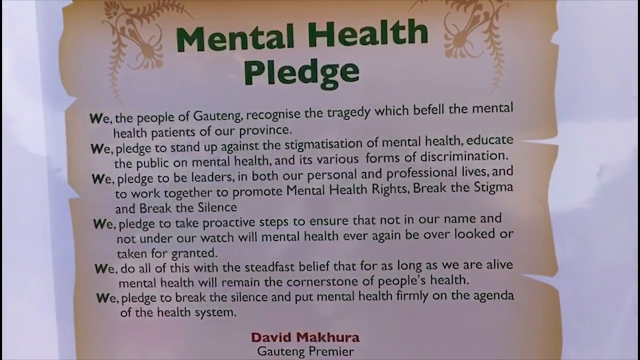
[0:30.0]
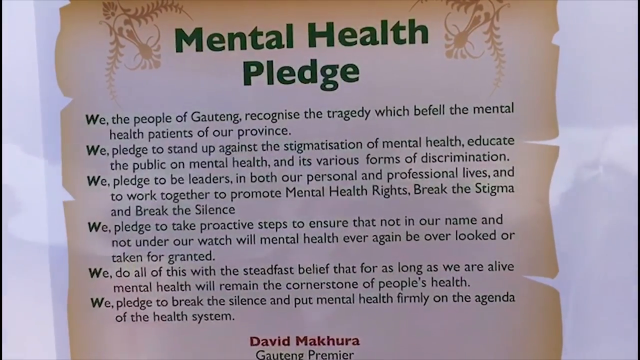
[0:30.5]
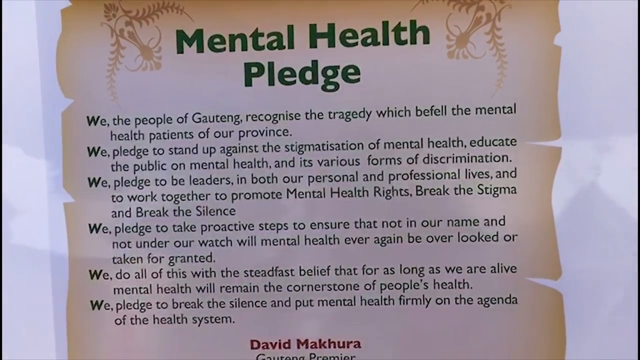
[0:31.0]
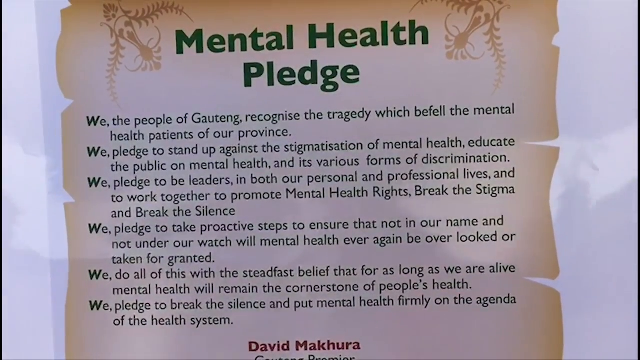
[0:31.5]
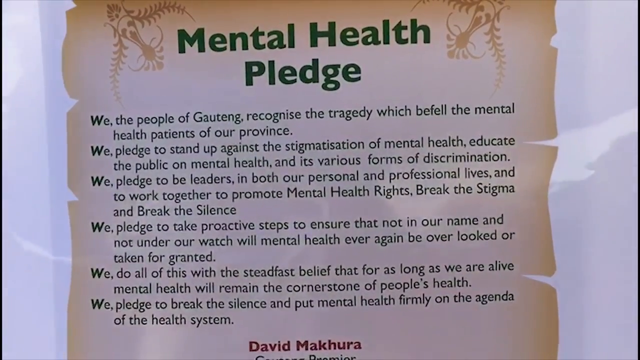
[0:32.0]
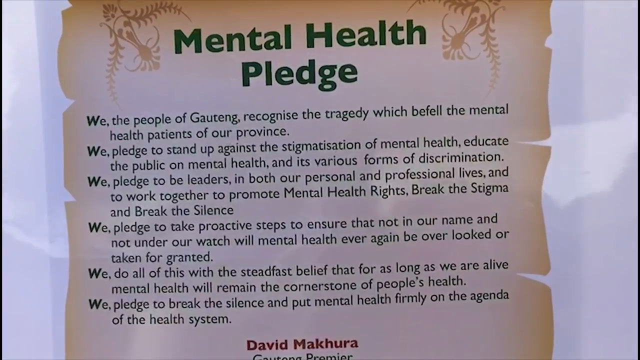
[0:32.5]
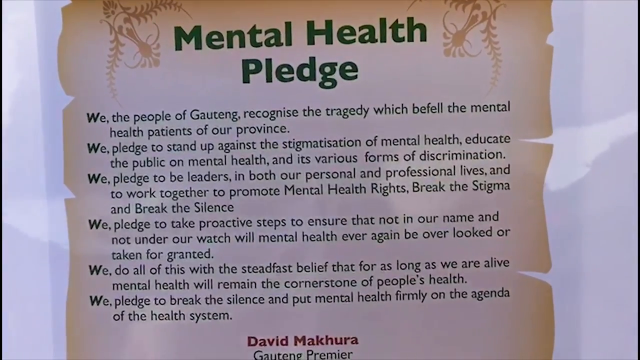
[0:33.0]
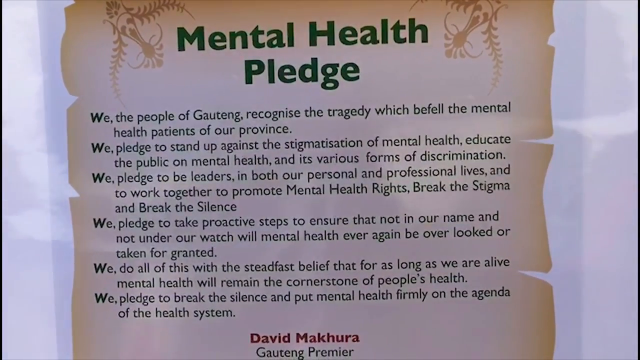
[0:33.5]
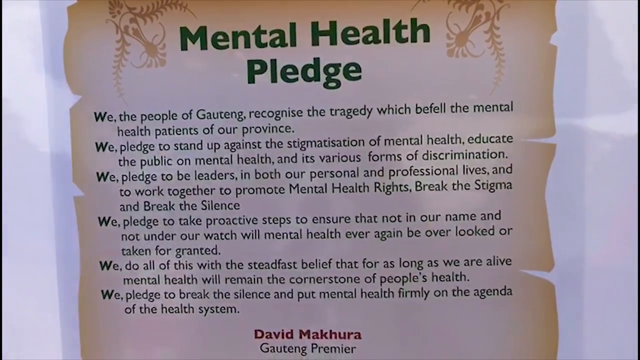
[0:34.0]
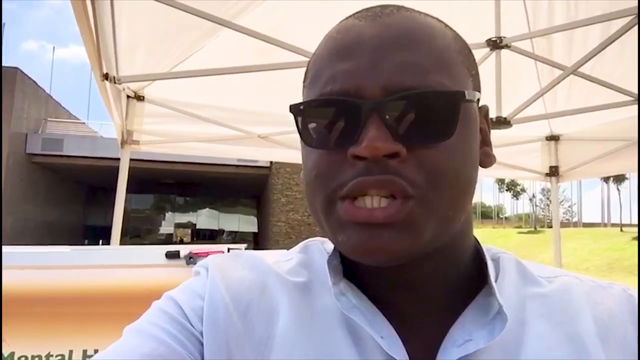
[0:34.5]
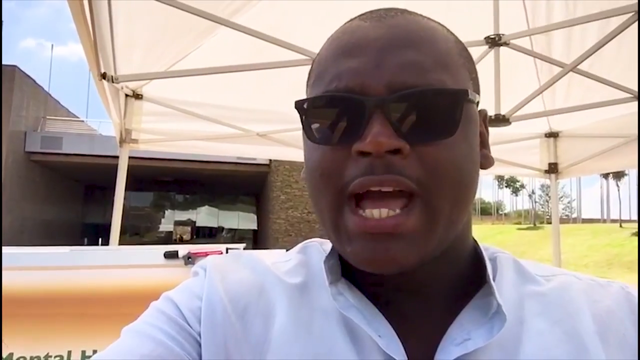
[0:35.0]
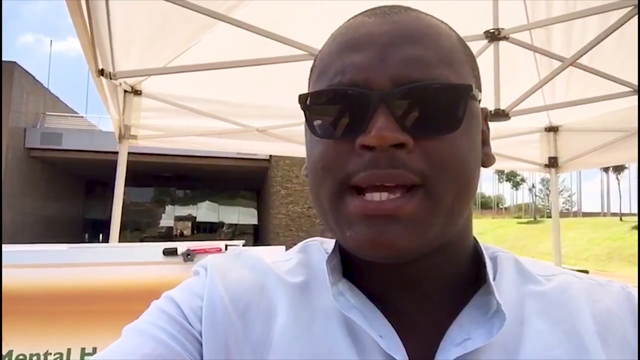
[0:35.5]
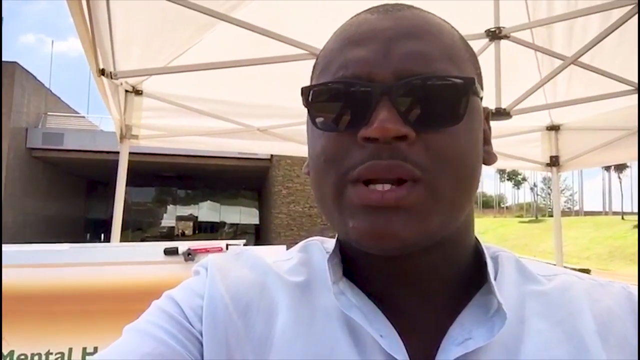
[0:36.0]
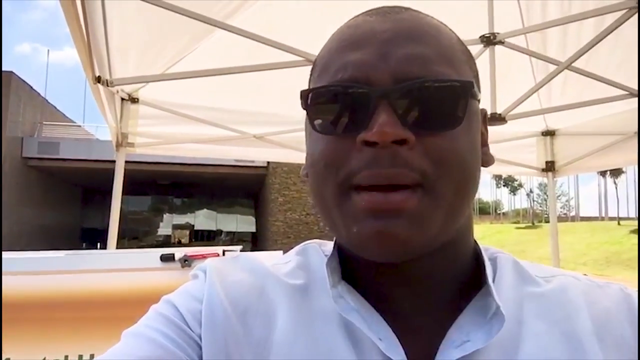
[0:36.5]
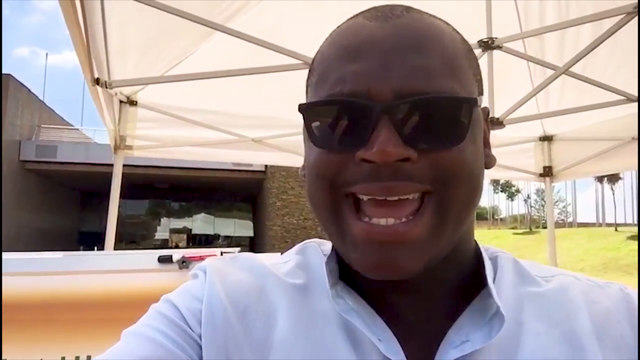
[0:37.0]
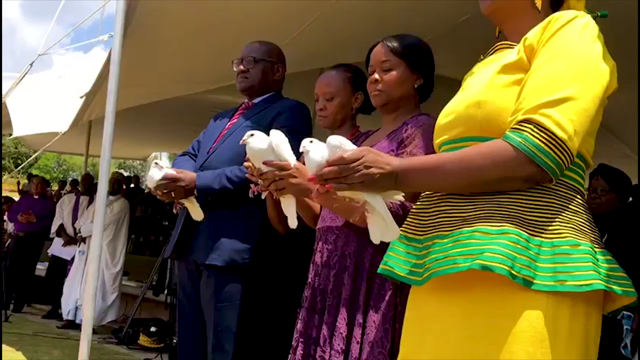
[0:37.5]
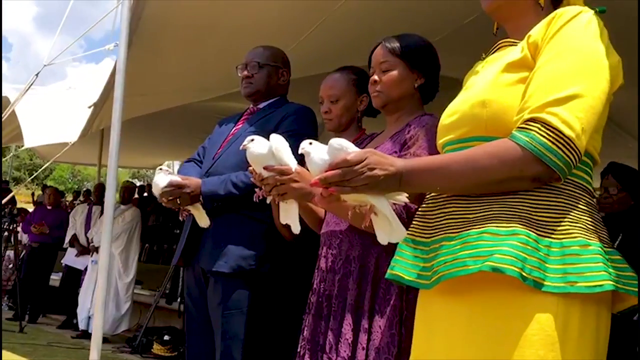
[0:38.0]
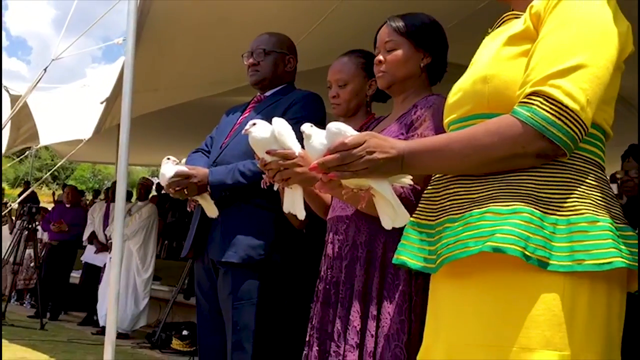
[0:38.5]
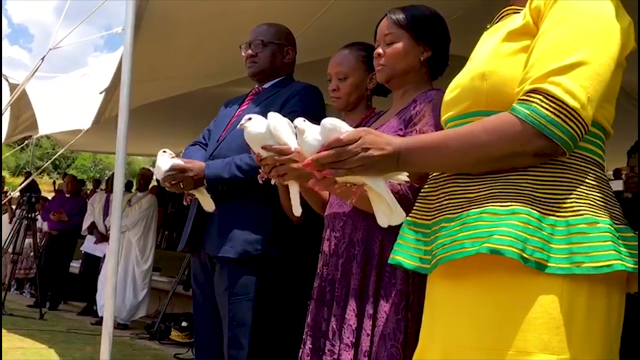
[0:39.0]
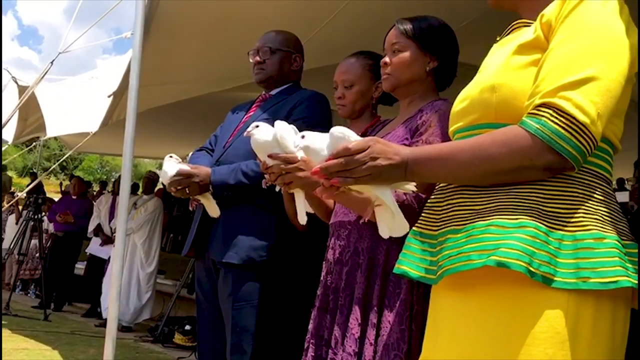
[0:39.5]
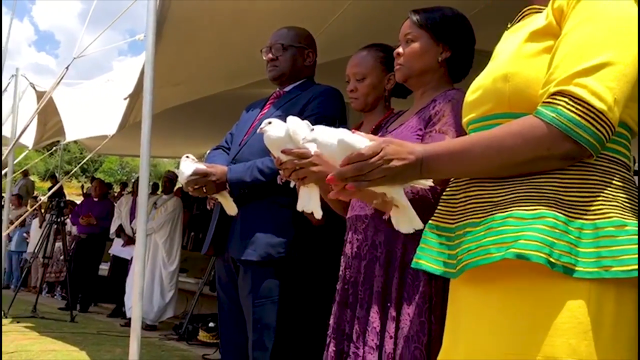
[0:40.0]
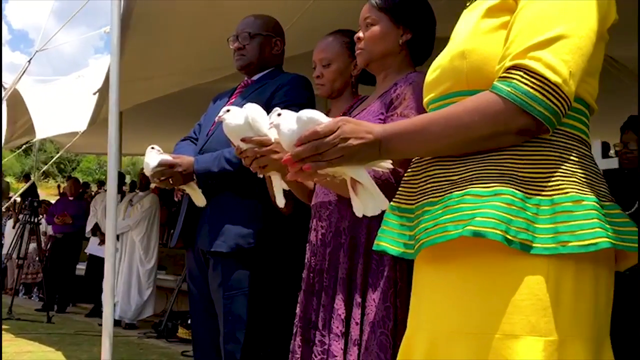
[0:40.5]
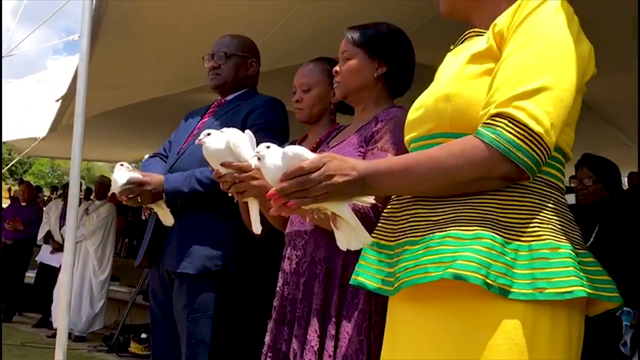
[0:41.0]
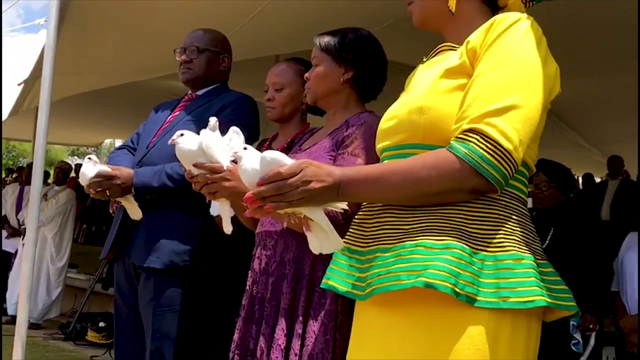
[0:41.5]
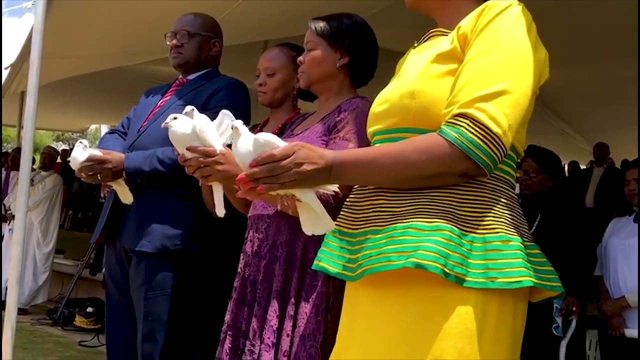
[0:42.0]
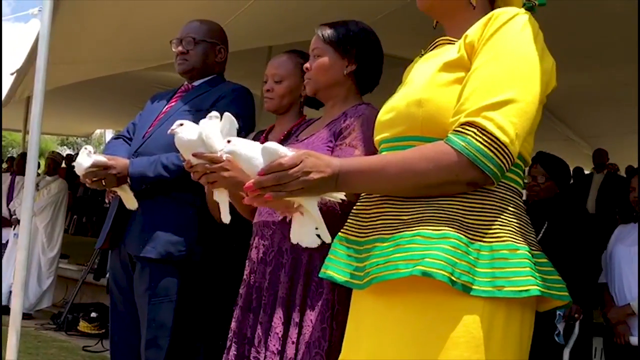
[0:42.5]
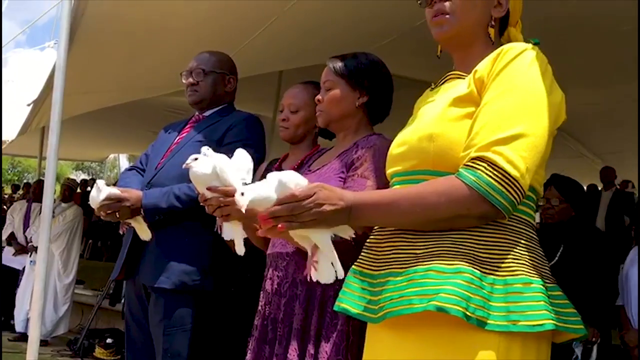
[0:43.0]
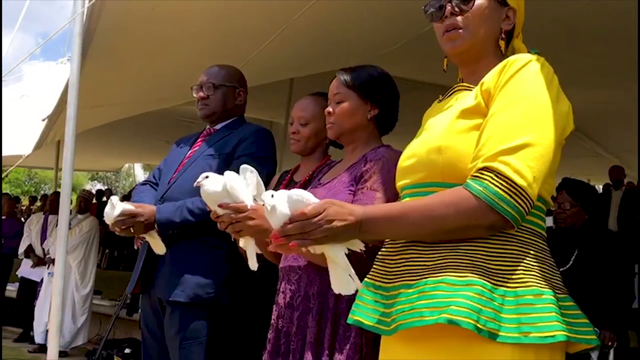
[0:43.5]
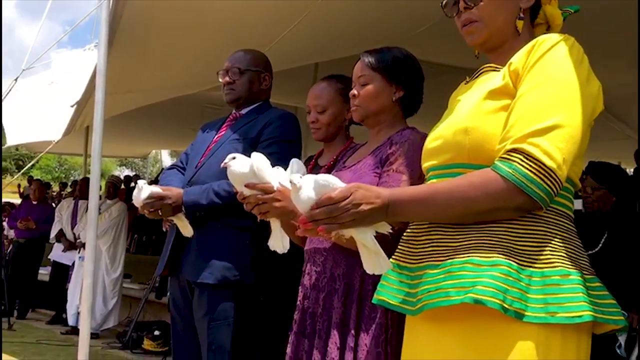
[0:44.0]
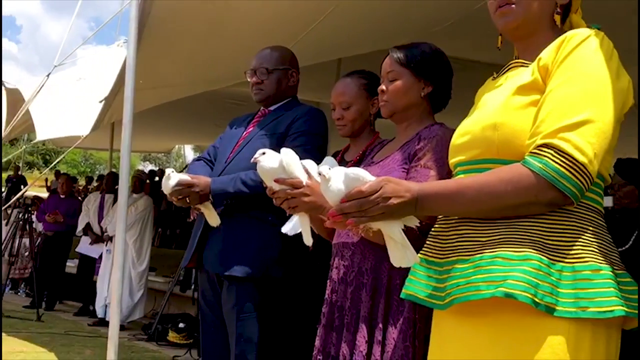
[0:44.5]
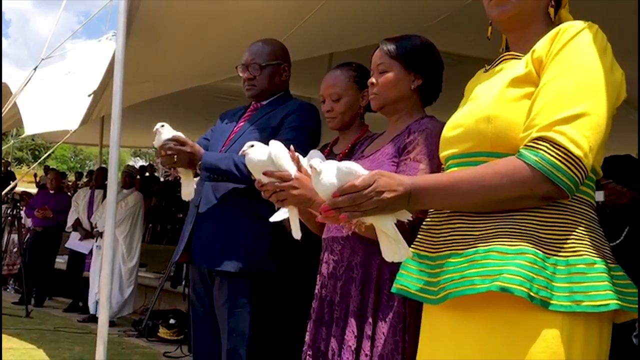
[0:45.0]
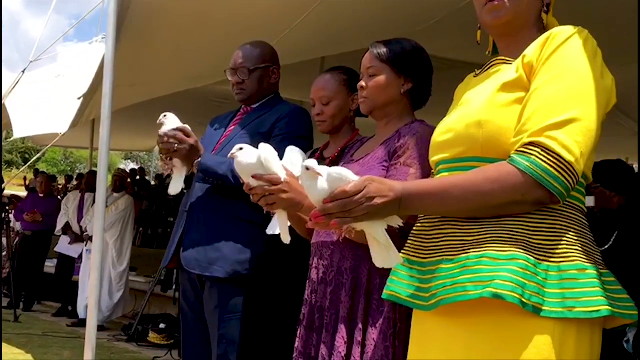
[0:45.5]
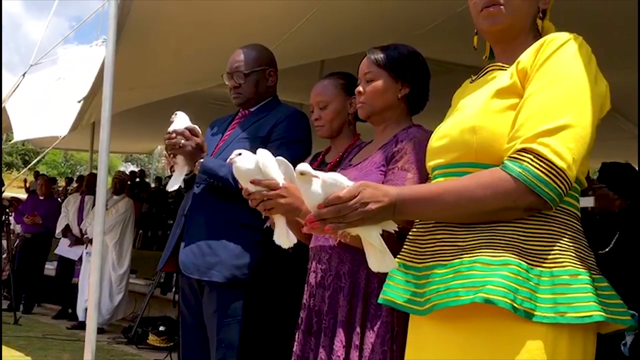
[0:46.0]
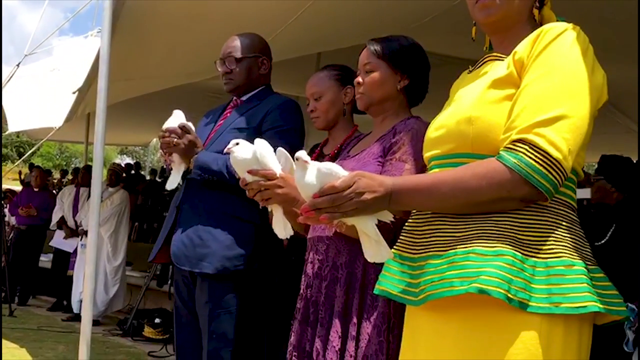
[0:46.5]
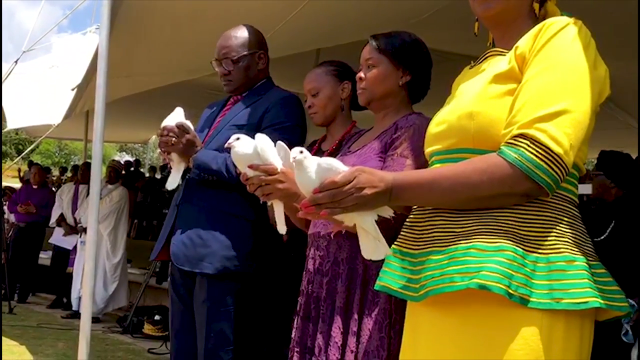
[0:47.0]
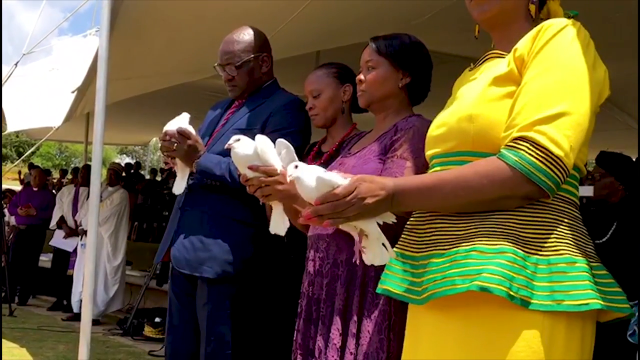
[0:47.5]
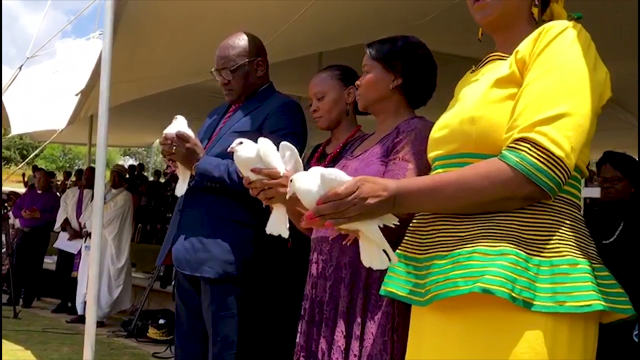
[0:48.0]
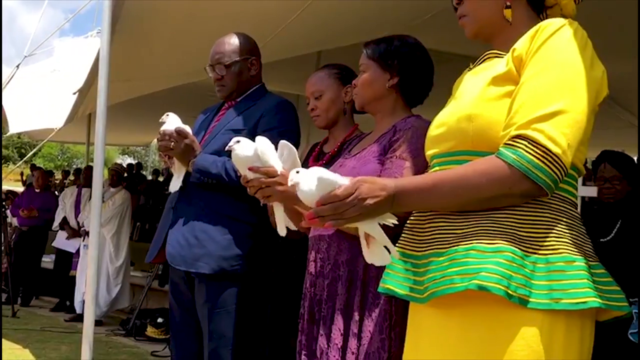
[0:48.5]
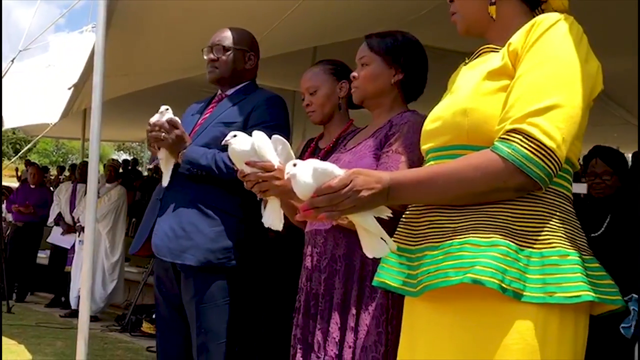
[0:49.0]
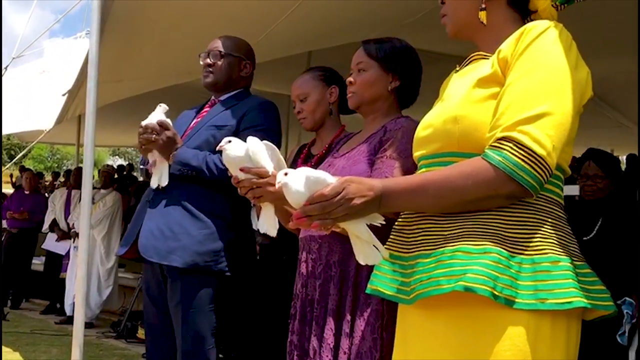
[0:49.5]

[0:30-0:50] The mental health pledge is on screen, and the view zooms in a little on the paper. The same man in sunglasses is then shown under the canopy, outdoors in daytime, continuing to talk. Next, a whole bunch of different people appear. Four are in the very forefront: a man wearing a suit, two women wearing colorful clothes, and another person wearing a yellow outfit. All four are holding white doves in their hands, apparently getting ready to release them. Other people are then shown. It is still daytime. The doves are squirming a lot in the people's hands, as if wanting to be released.